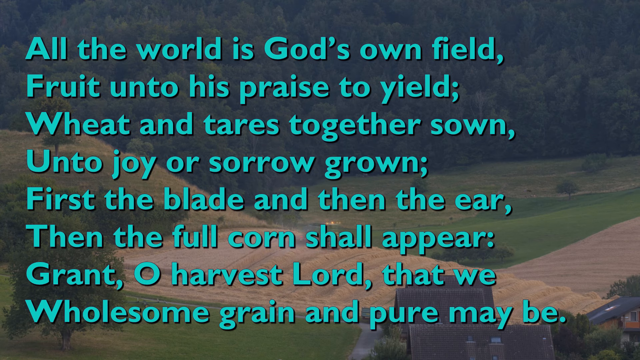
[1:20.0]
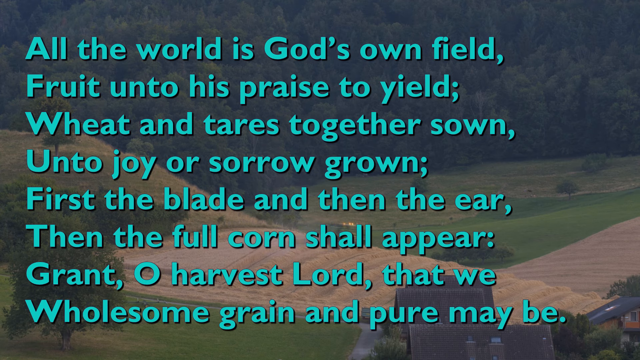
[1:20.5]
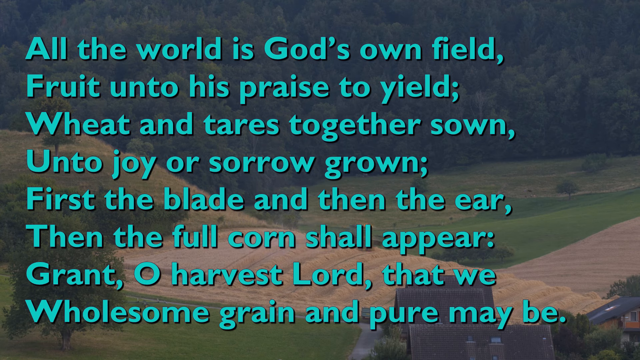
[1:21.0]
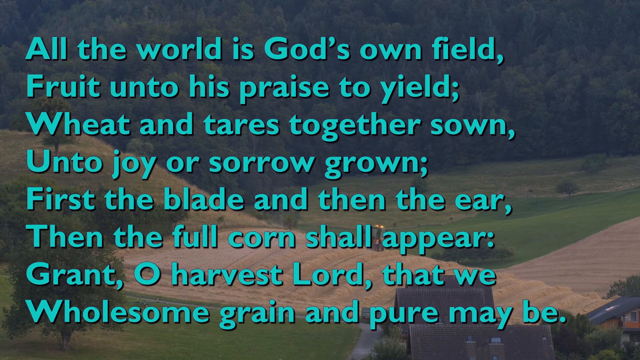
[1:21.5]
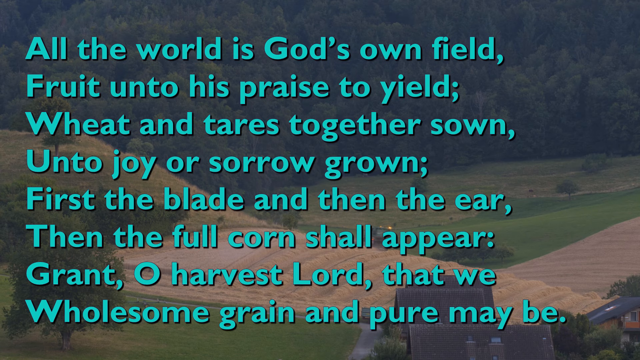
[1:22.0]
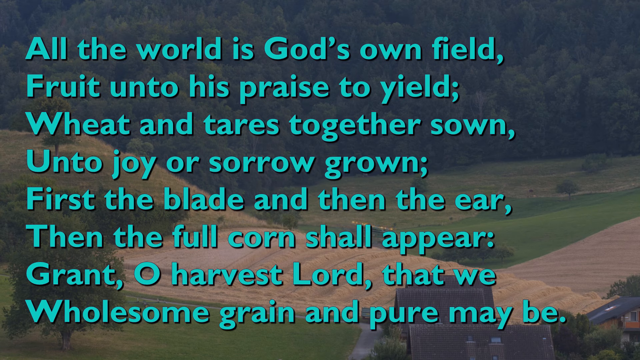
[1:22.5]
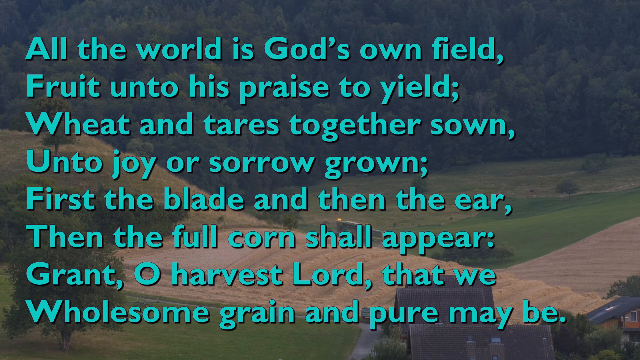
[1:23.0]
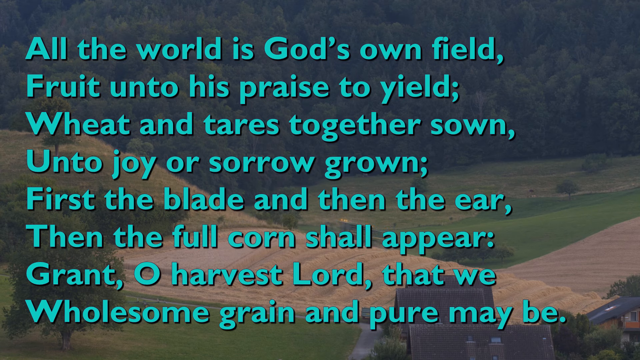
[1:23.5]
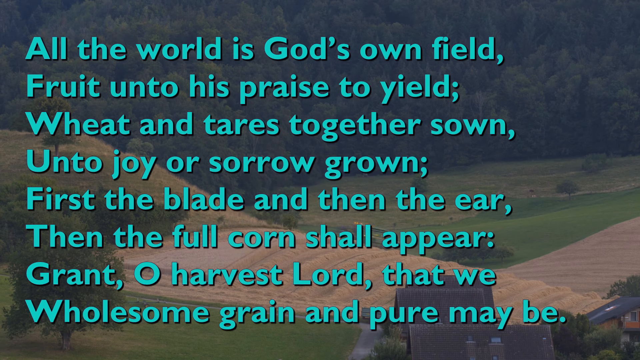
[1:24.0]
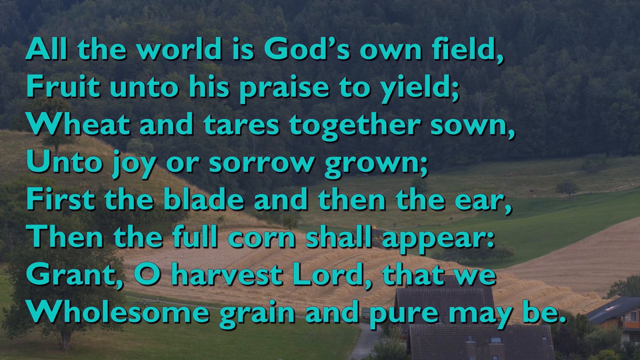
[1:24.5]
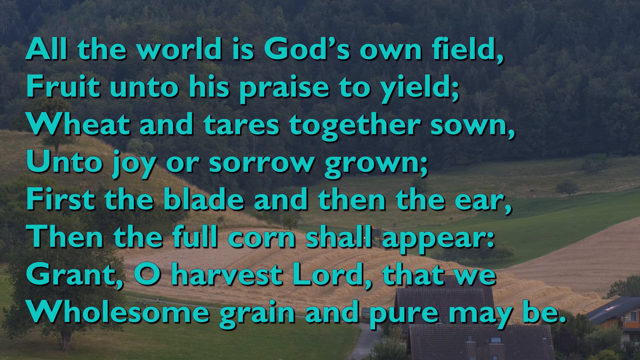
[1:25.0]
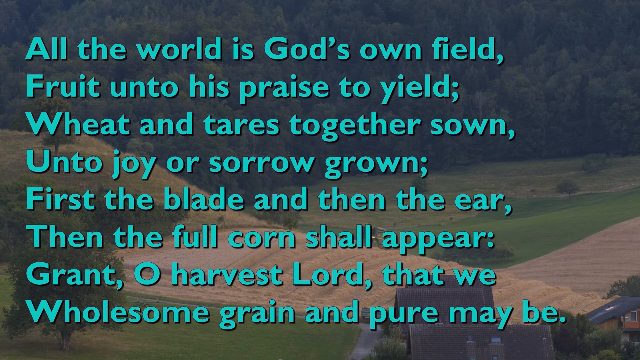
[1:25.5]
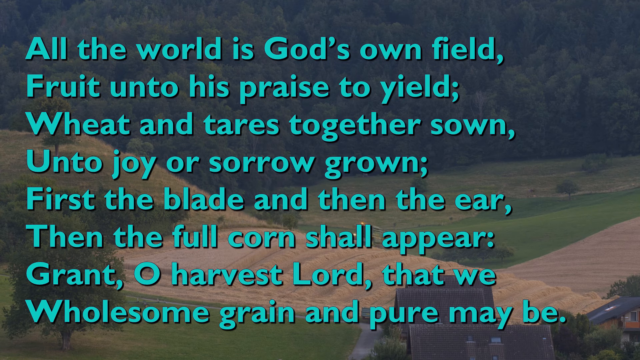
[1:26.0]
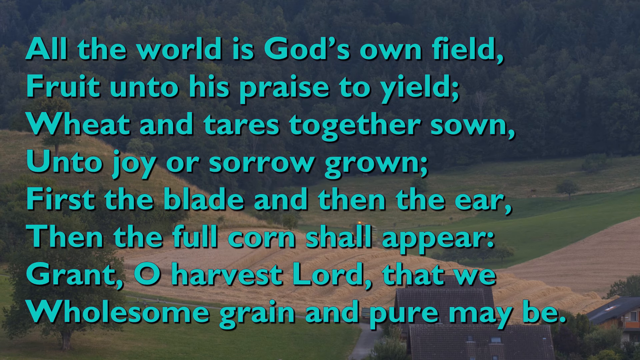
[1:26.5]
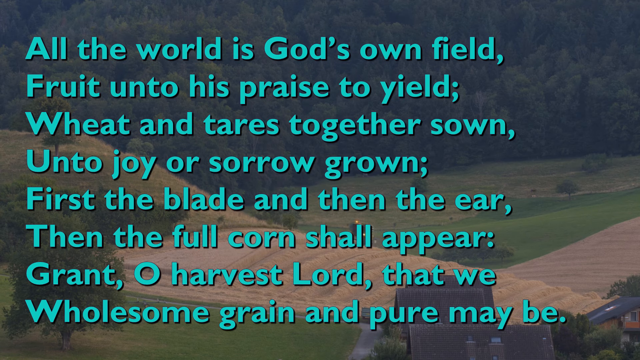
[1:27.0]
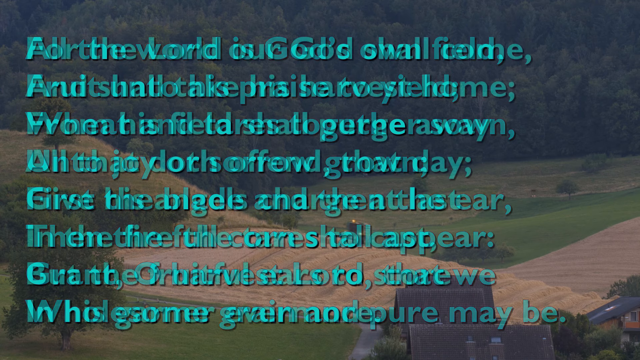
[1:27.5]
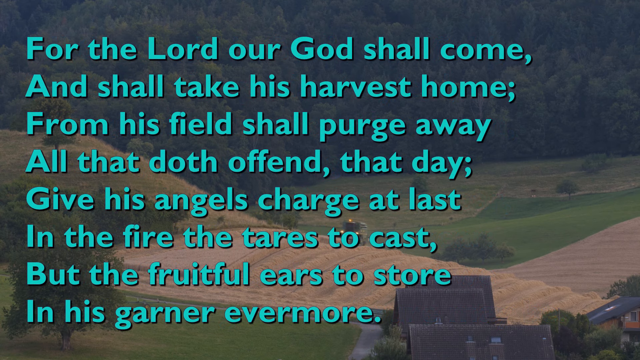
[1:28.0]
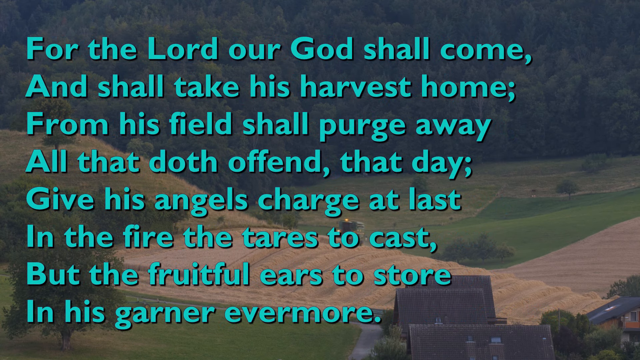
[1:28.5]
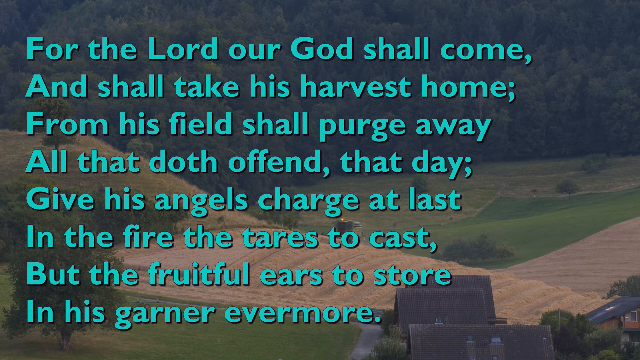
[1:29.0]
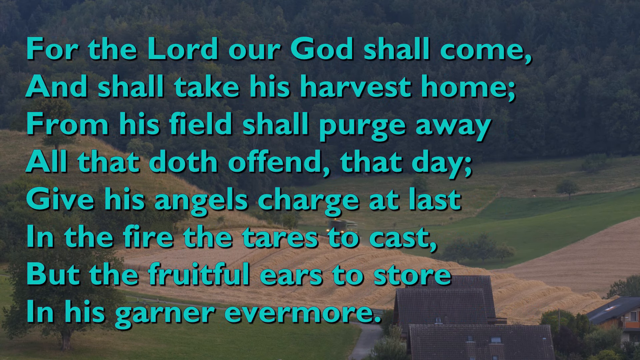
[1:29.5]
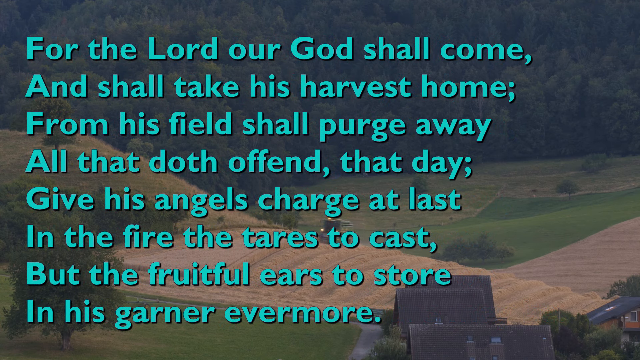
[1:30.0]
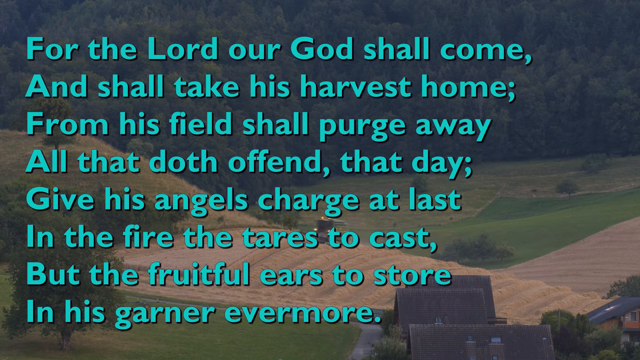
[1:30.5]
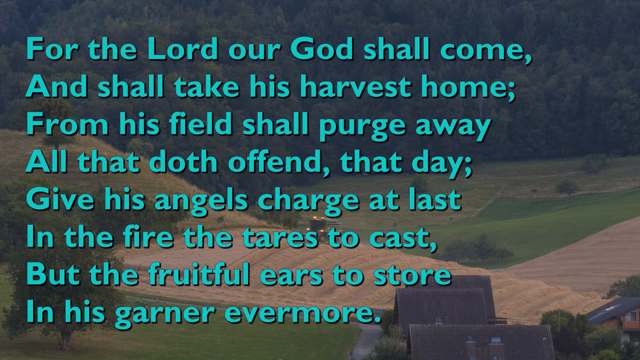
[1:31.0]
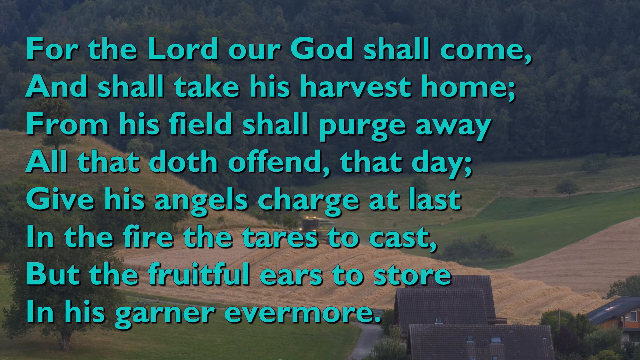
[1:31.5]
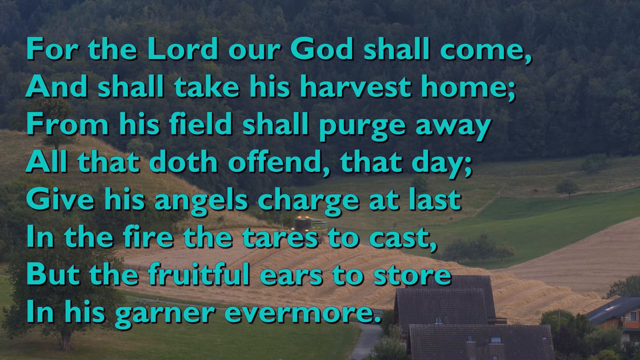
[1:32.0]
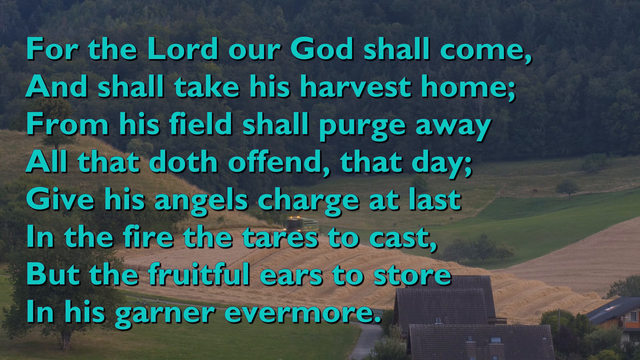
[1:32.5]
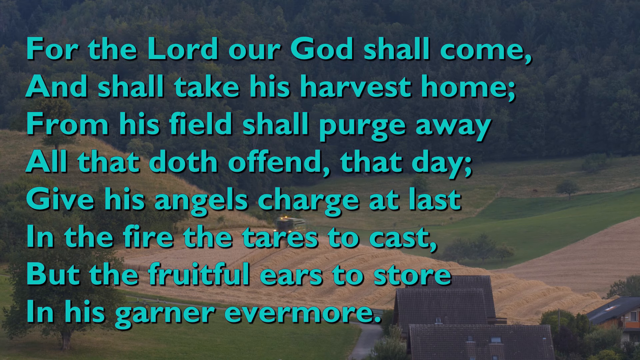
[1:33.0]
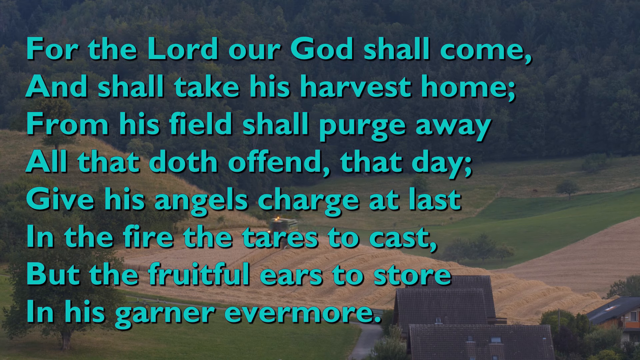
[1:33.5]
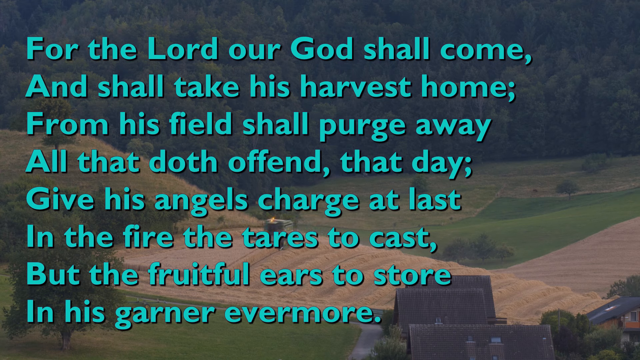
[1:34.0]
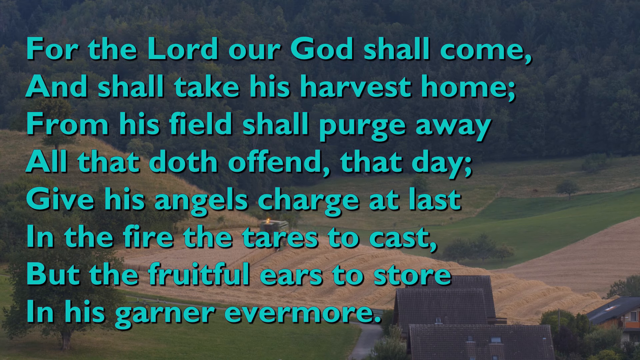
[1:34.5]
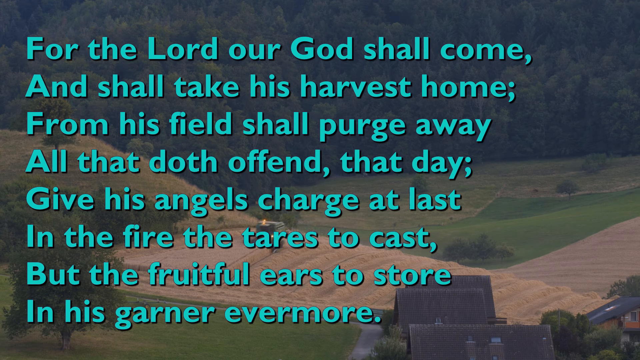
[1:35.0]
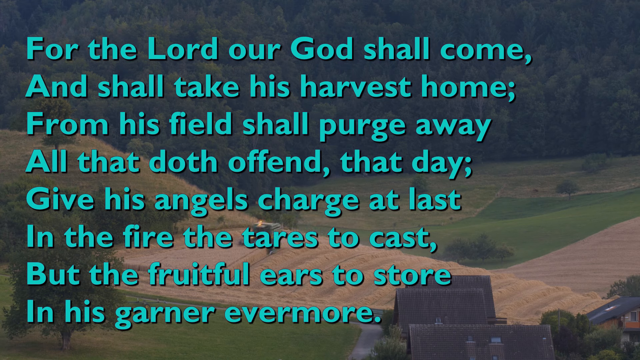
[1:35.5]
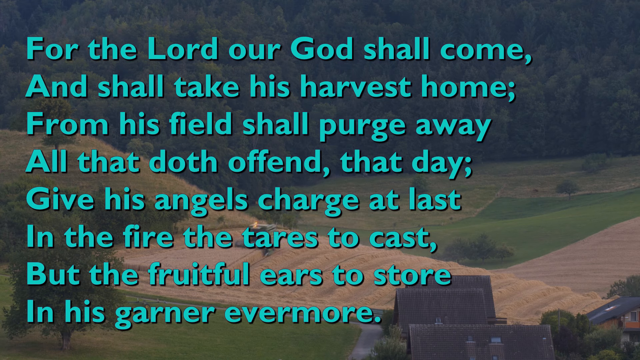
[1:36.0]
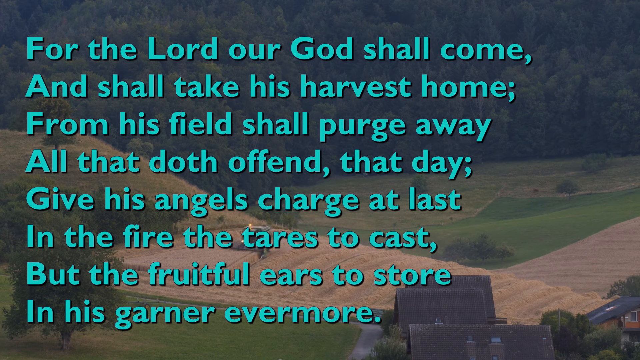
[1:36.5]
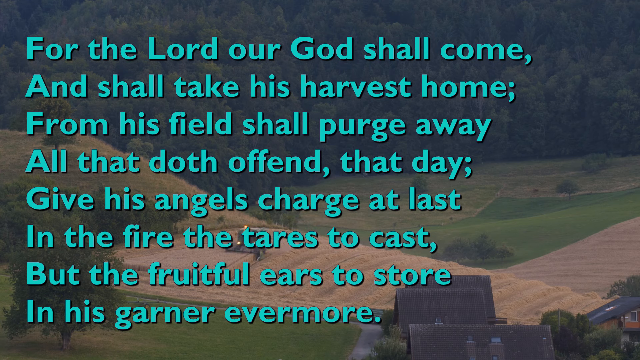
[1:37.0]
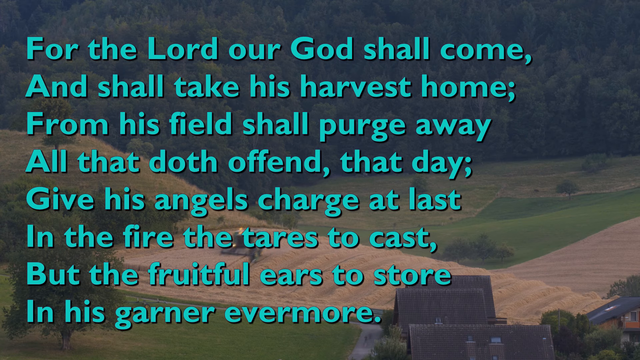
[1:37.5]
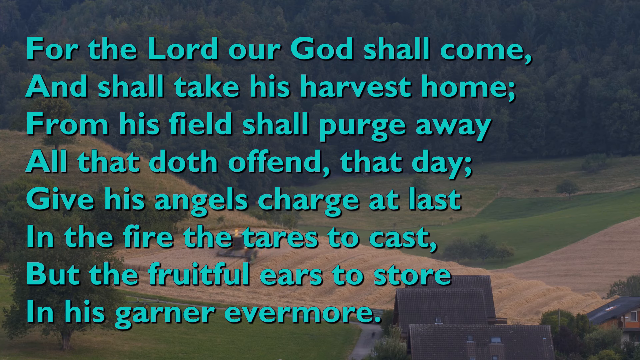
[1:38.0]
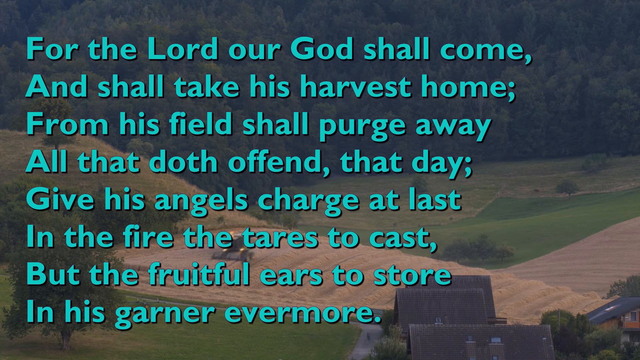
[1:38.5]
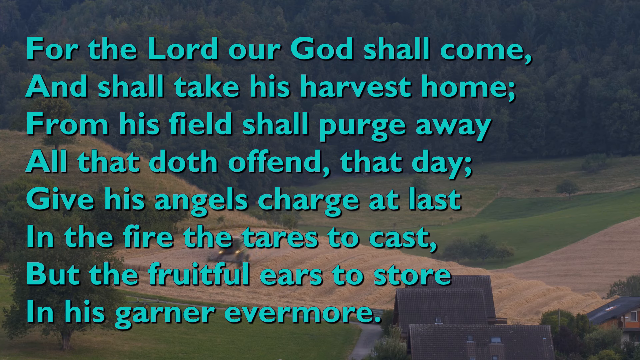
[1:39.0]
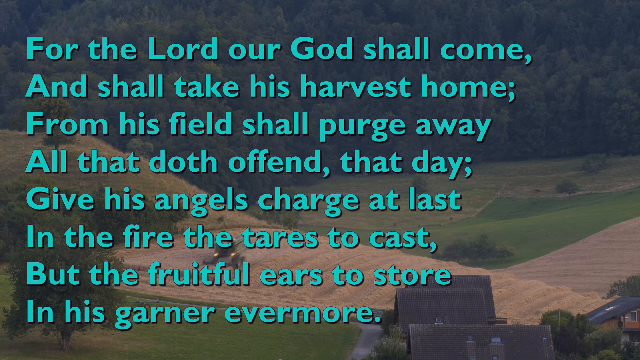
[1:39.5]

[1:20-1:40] The rooftops of two small houses are visible. A light tan wheat field goes up onto a hill, and a machine is cutting down layers of the wheat. Past the wheat field is a patch of really dark green grass cut really short, then more acres of light brown and lighter green grass, and beyond that a big, tall wooded area of nothing but pine trees. Another grassy hill has one solitary tree on top of it. Across the screen the text reads: "All the world is God's own field fruit unto his praise to yield wheat and tares together sown unto joy or sorrow grown first of blade and then the year then the full corn shall appear grant O harvest Lord that we wholesome grain and pure may be." Then it cuts to another screen that reads: "For the Lord our God shall come and shall take his harvest home from this field shall purge away all that doth offend that day give his angels charge at last in the fire the tares to cast but the fruitful ears to store in his garner evermore."